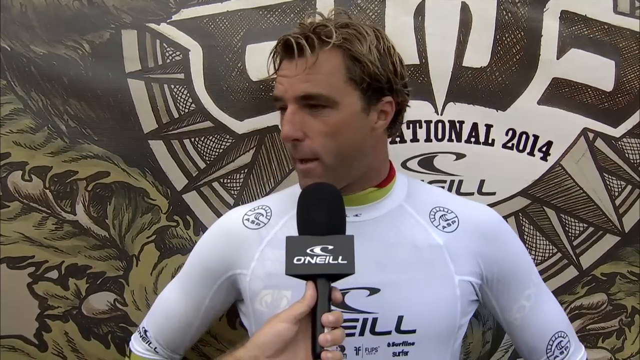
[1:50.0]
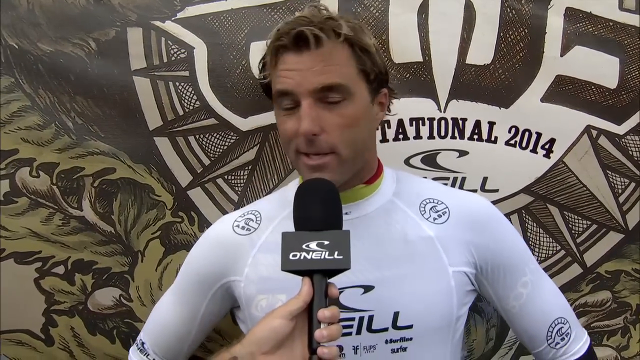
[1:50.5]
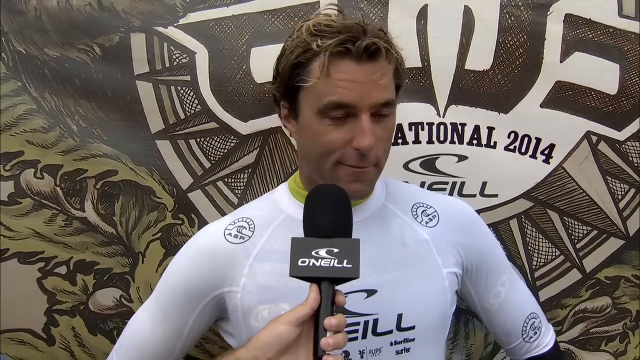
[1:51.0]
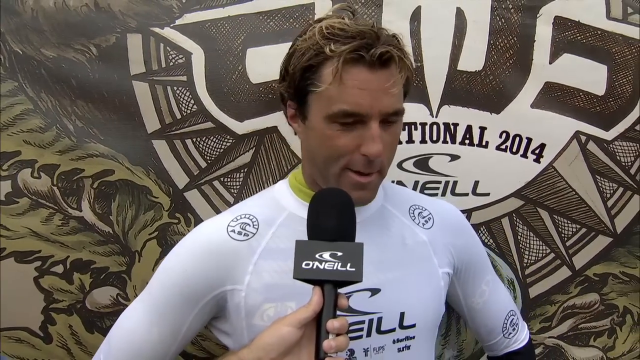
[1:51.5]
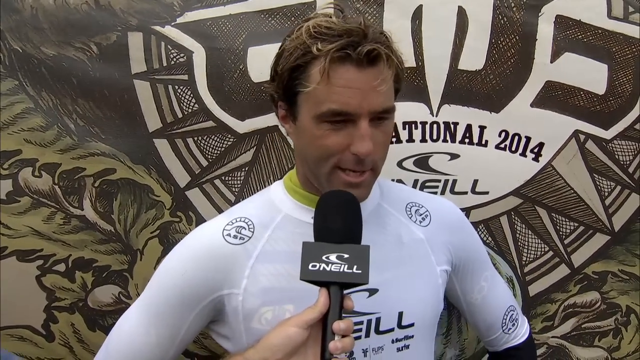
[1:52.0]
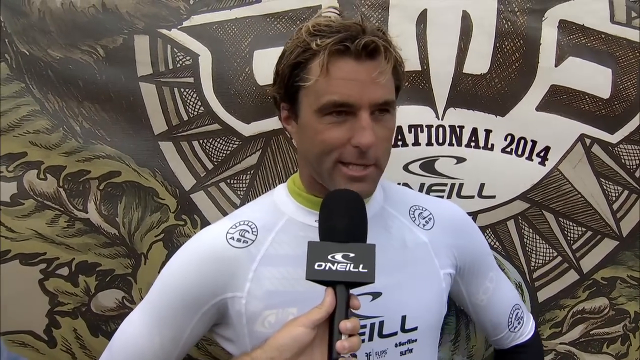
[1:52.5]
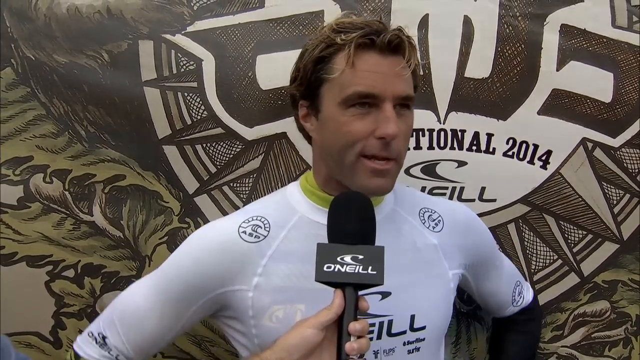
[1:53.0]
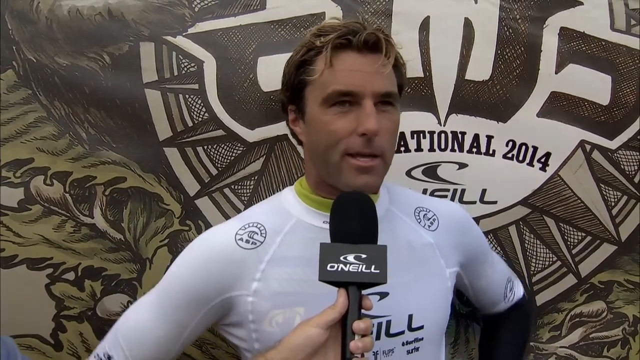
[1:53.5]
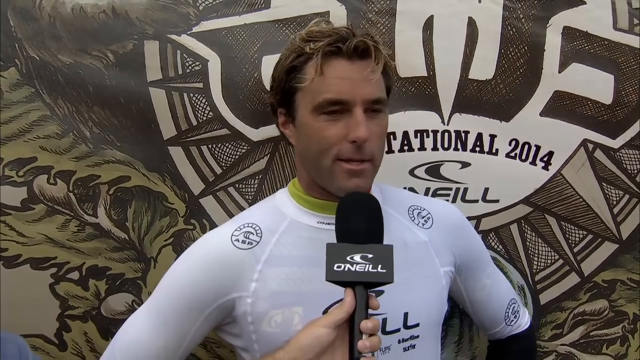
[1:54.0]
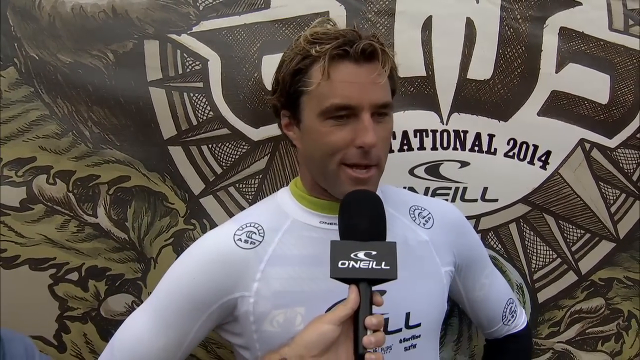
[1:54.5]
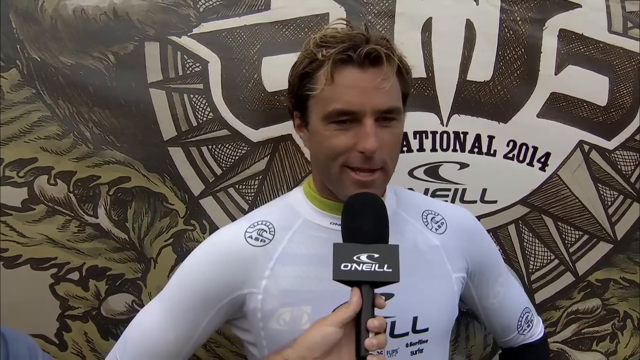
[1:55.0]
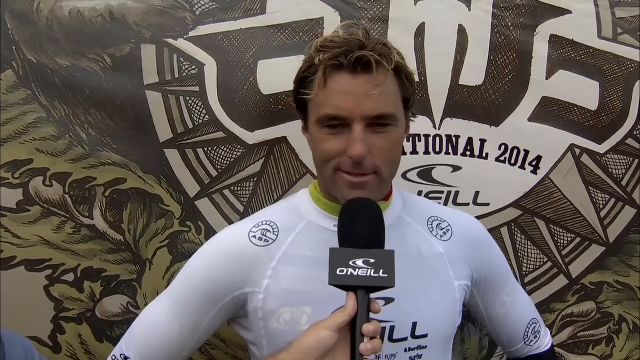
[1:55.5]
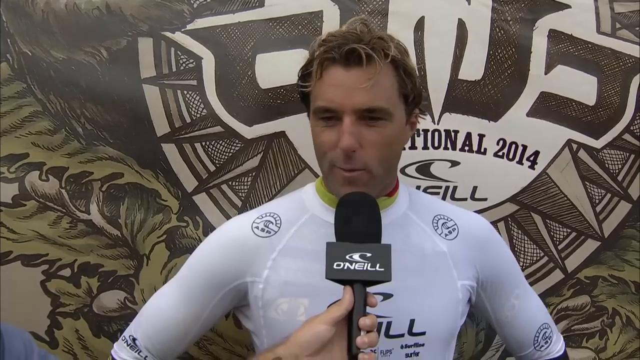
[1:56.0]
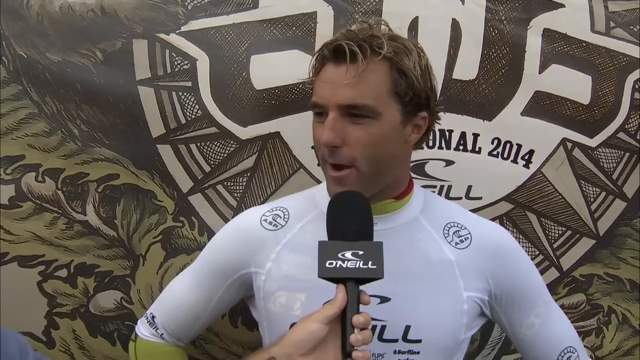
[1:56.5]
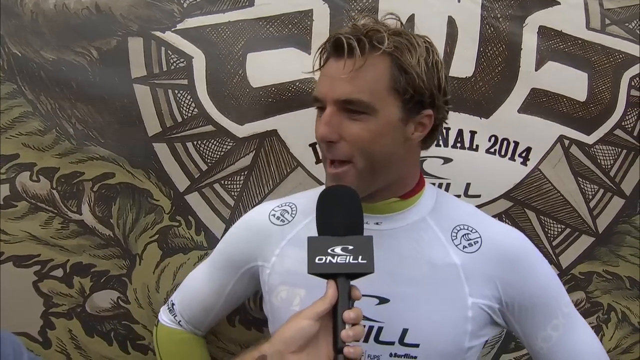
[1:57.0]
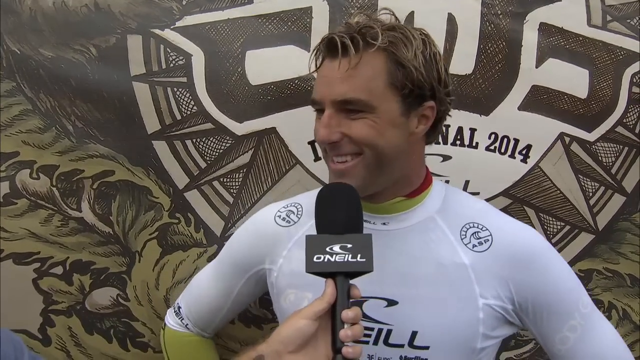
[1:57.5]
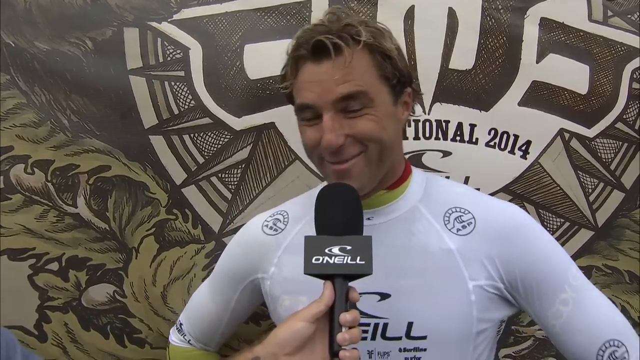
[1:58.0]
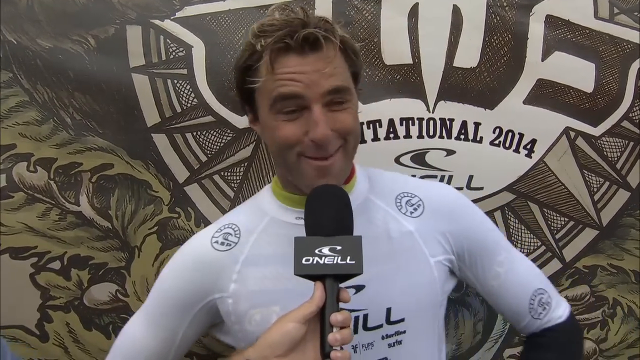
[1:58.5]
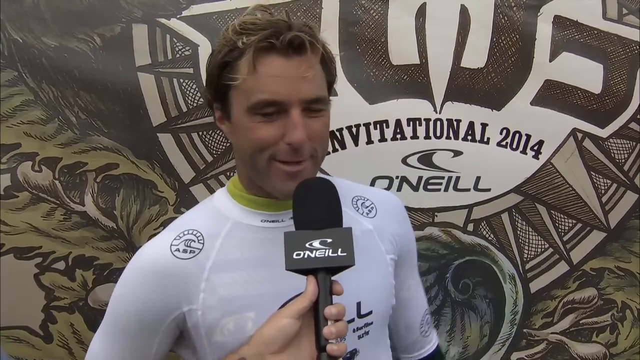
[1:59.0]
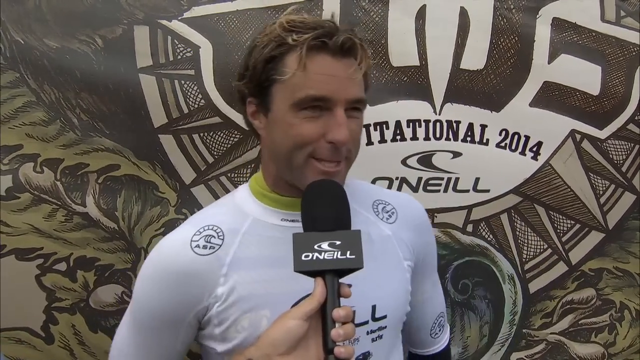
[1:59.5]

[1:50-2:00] A surfer stands in the center of the screen against a backdrop. He has blondish brown hair and wears a white top. Somebody else holds a microphone to his face; the microphone's top is black and it bears the word "O'Neill" with a little white wave above it. The surfer is either talking into the microphone or to the person holding it. The backdrop behind him is kind of an emblem, on which "International 2014" and "O'Neill" can be made out.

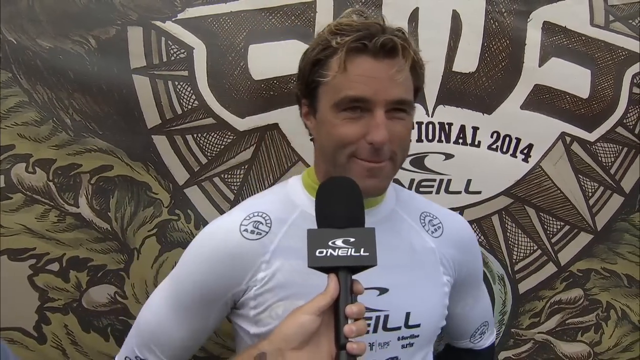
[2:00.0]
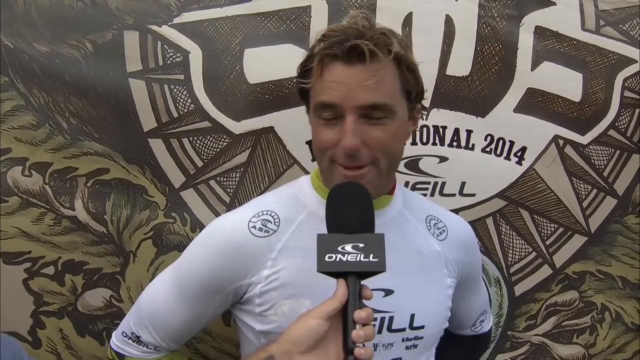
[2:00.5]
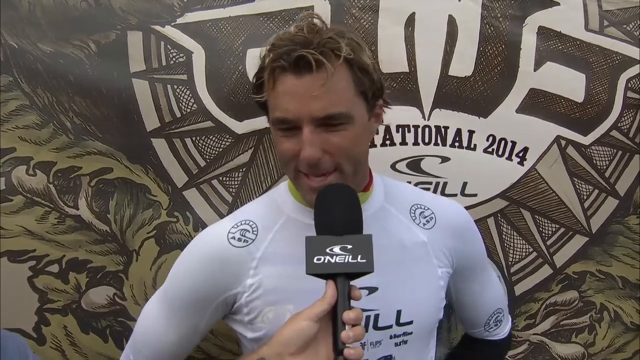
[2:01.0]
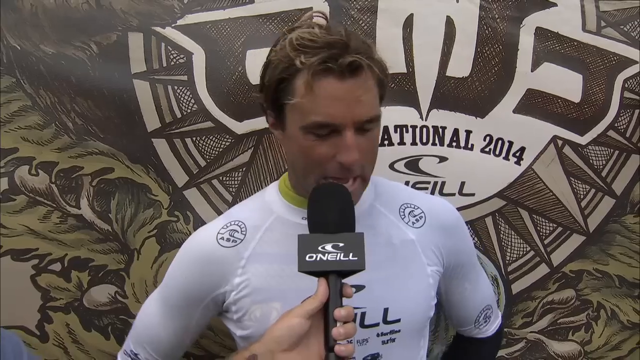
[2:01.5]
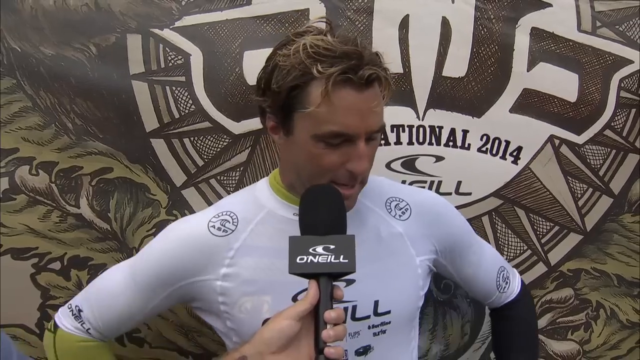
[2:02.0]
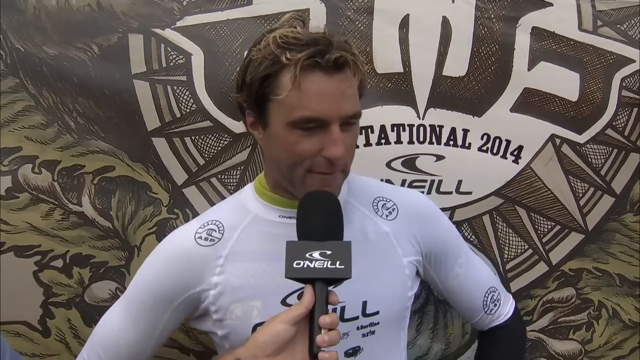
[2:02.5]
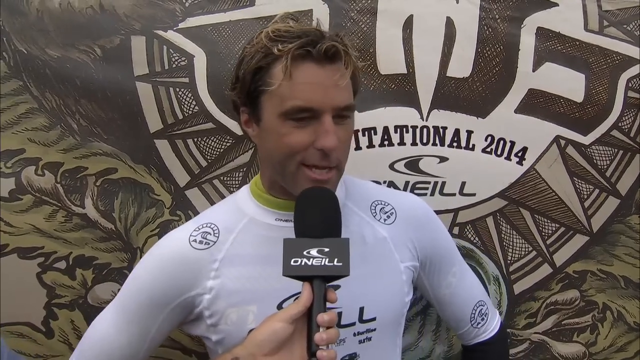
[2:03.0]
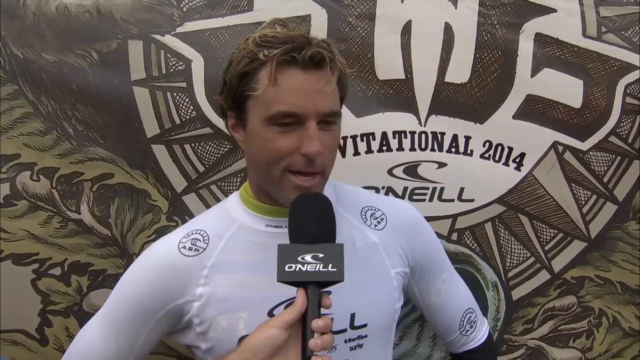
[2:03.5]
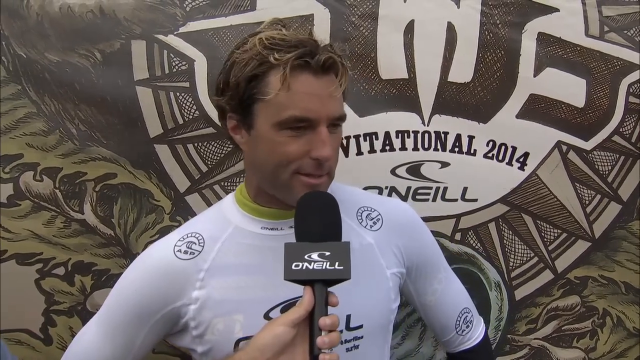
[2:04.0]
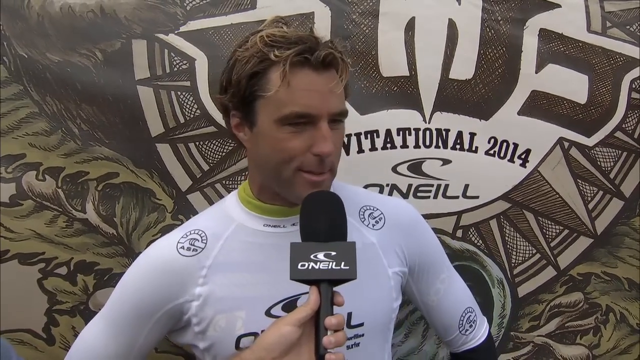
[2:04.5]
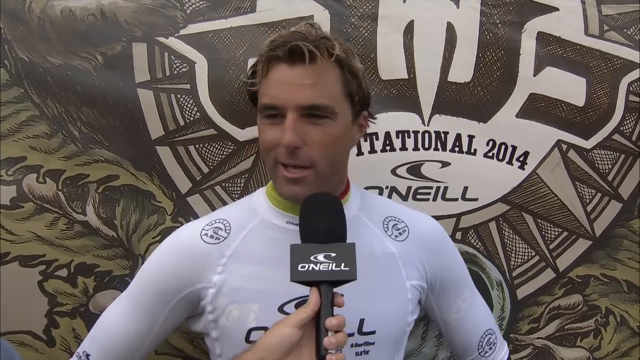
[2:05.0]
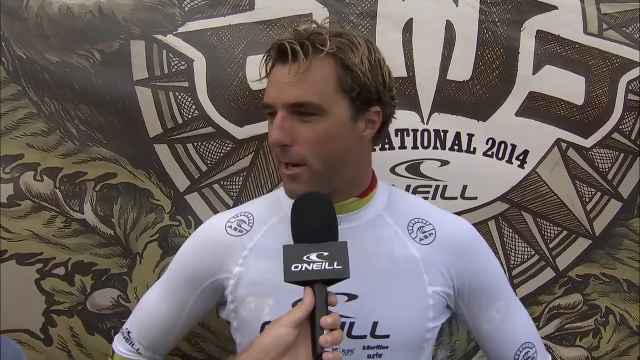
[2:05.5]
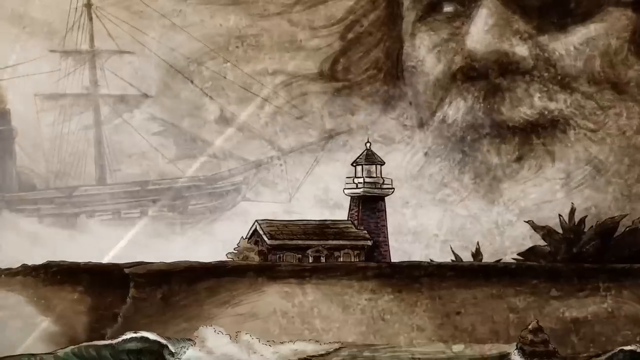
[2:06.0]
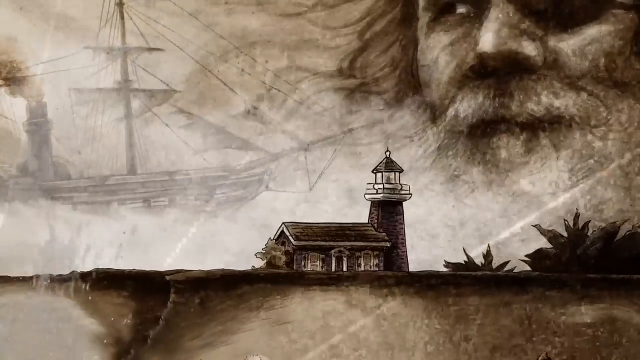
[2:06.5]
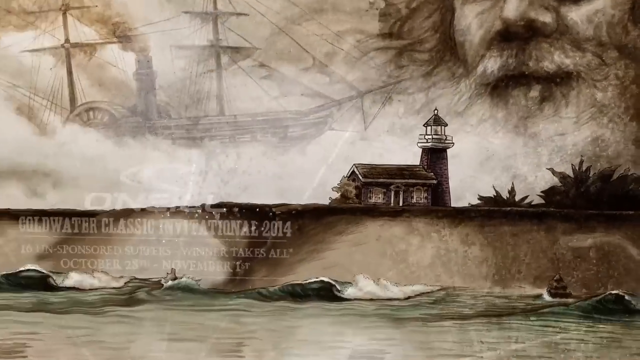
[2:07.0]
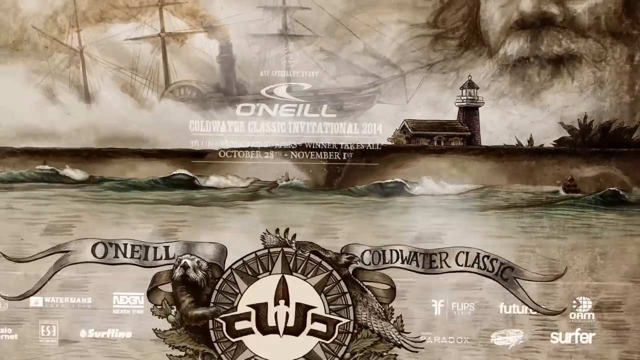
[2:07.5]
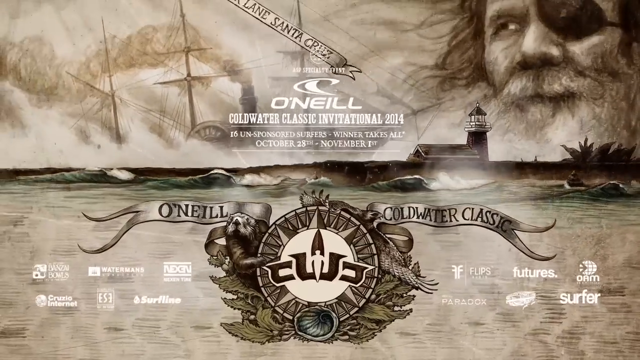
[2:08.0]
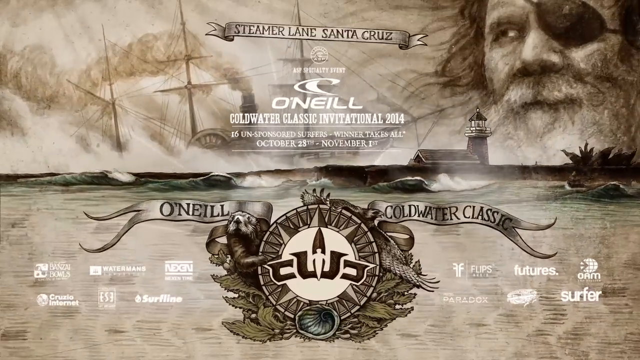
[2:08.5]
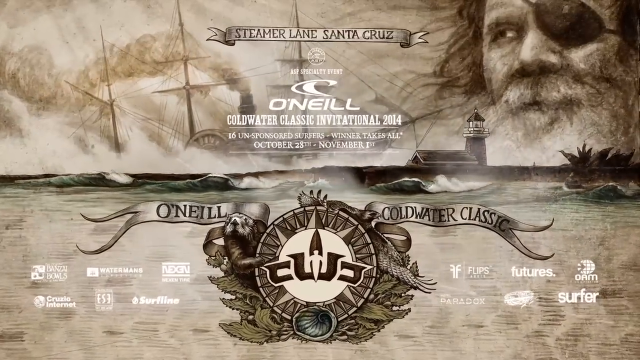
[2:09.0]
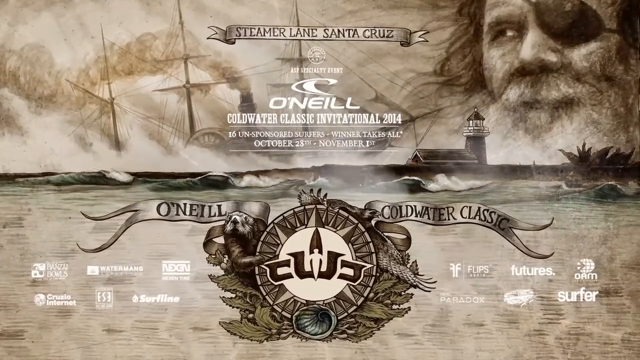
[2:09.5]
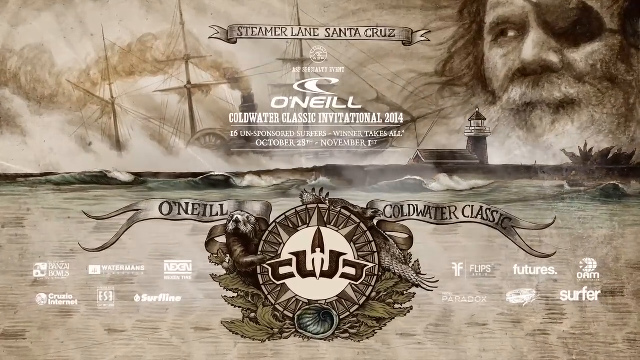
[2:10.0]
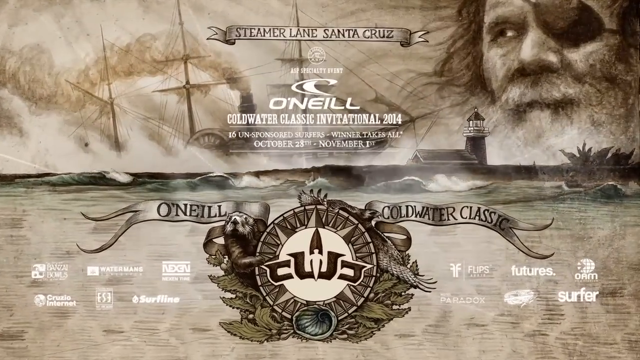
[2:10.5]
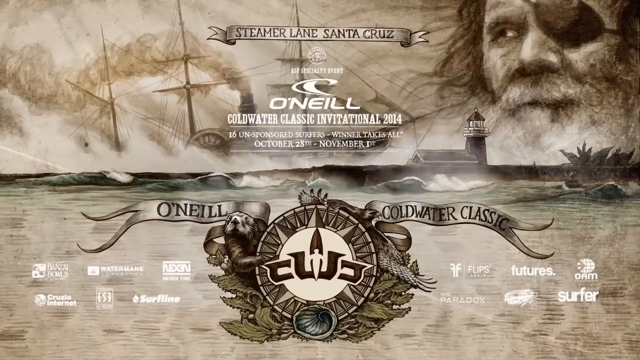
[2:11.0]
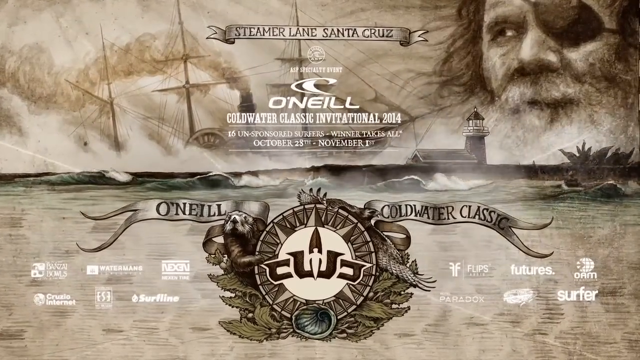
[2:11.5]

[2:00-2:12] A Caucasian man with blondish brown hair and a white top is in the center of the screen. Somebody holds a microphone to his face; the microphone is black on top and says "O'Neill" with a little white wave above the word. Behind him is a backdrop with an emblem on which "international", "2014" and the word "NEILL" can be made out, with a little white or white and black wave between them. The man talks into the microphone or to the person holding it.